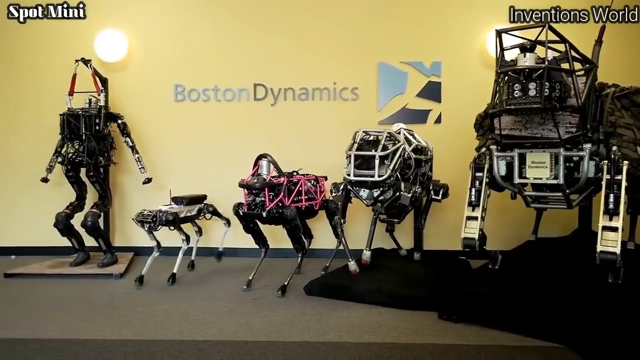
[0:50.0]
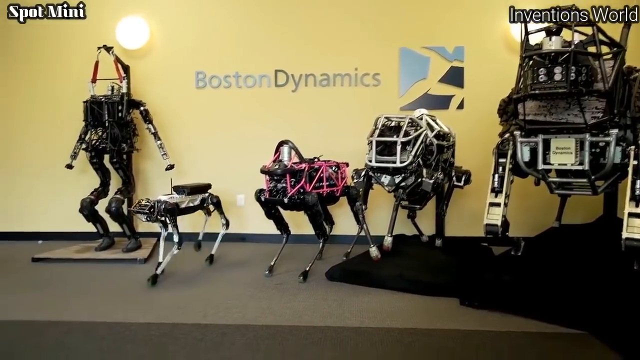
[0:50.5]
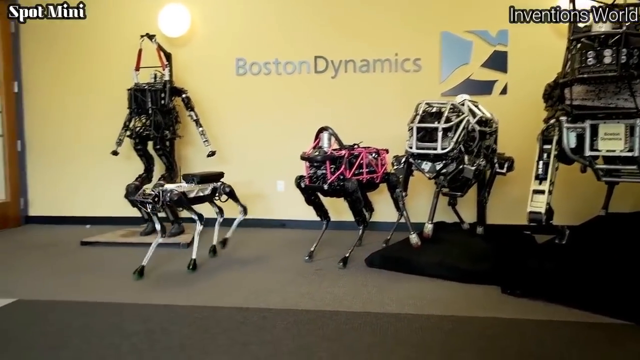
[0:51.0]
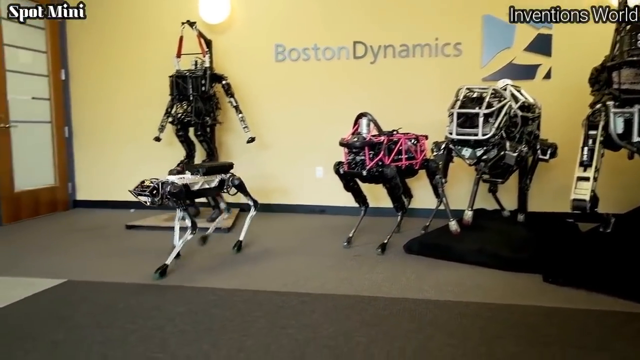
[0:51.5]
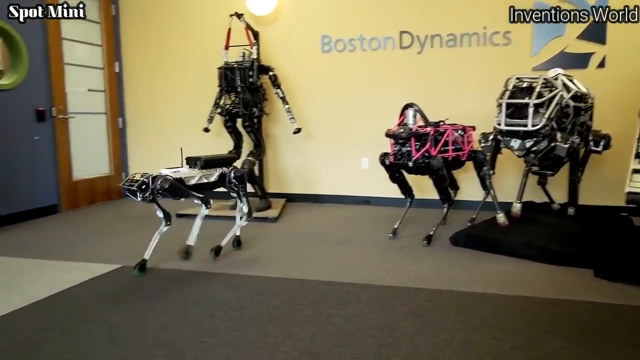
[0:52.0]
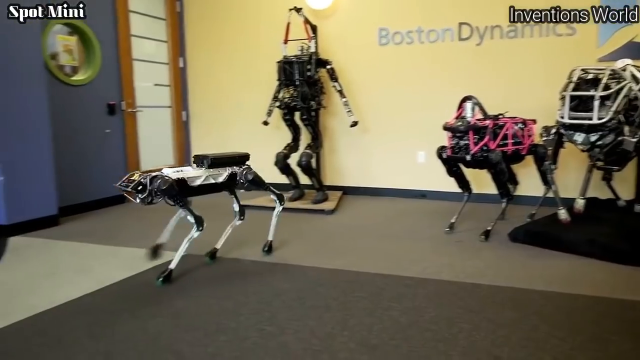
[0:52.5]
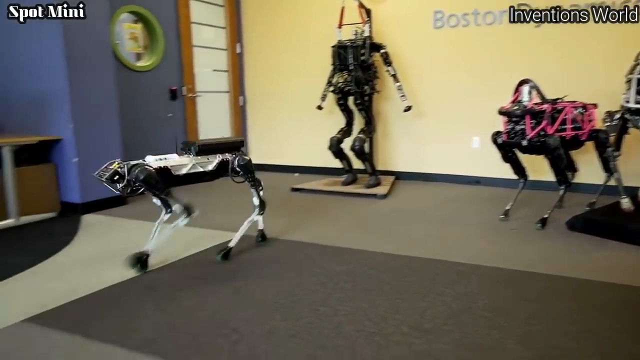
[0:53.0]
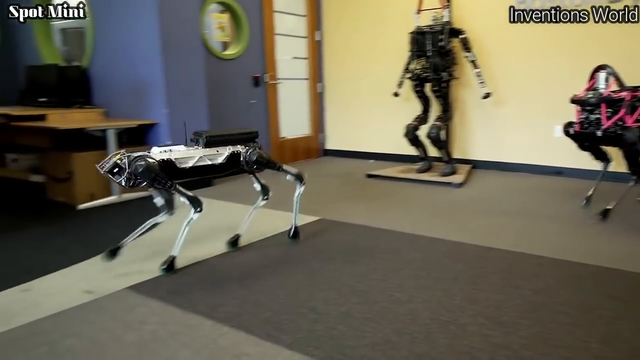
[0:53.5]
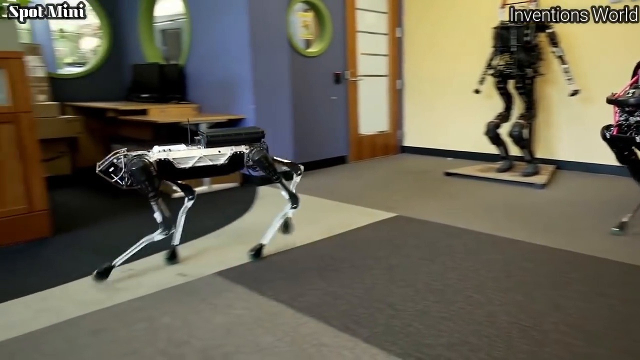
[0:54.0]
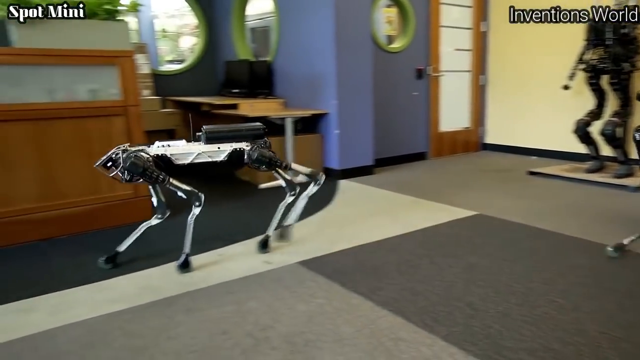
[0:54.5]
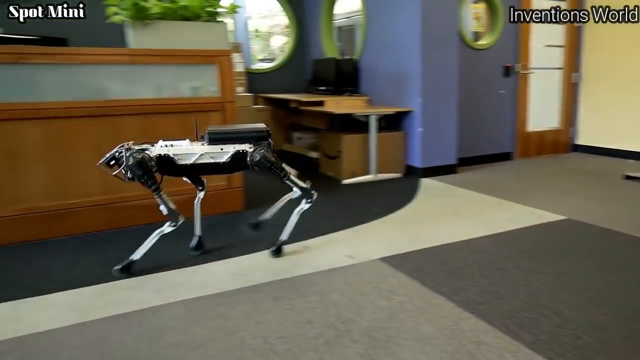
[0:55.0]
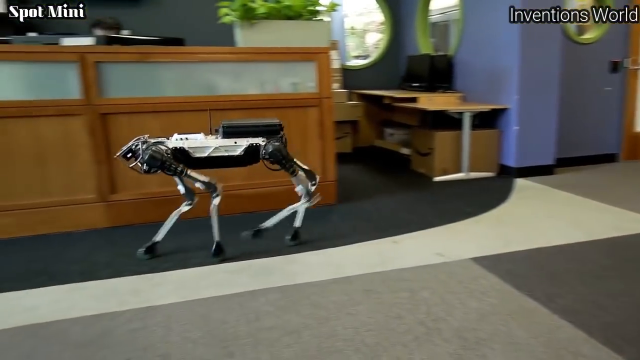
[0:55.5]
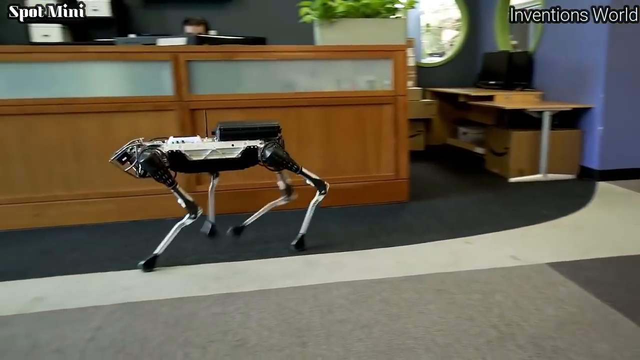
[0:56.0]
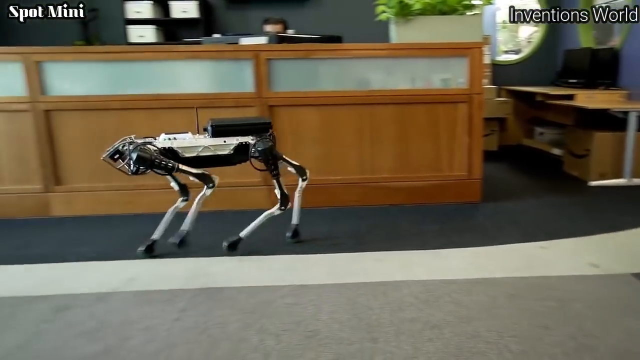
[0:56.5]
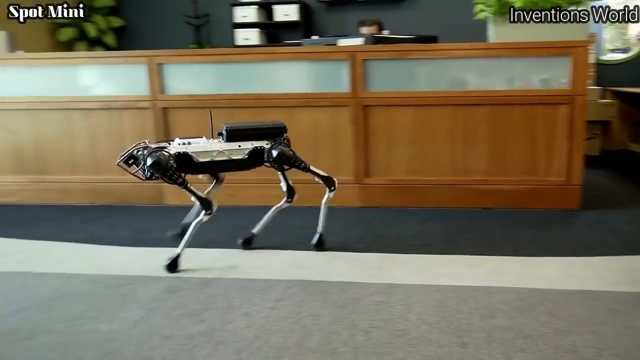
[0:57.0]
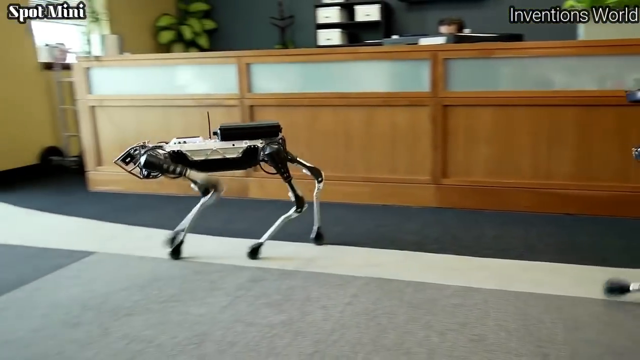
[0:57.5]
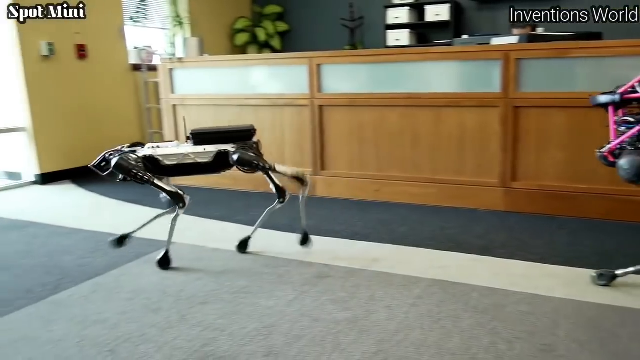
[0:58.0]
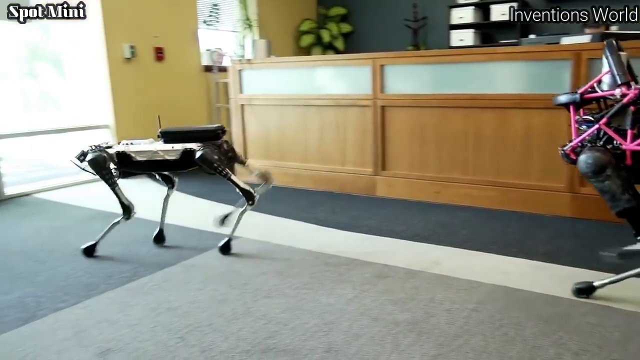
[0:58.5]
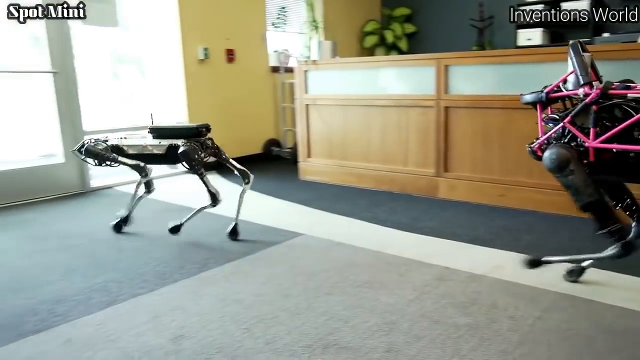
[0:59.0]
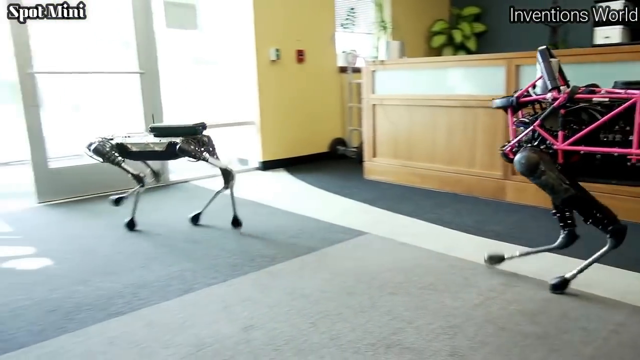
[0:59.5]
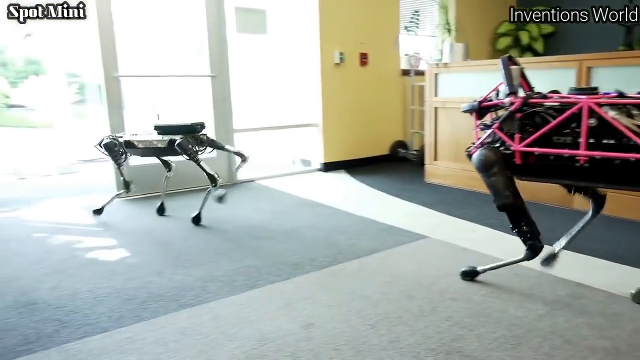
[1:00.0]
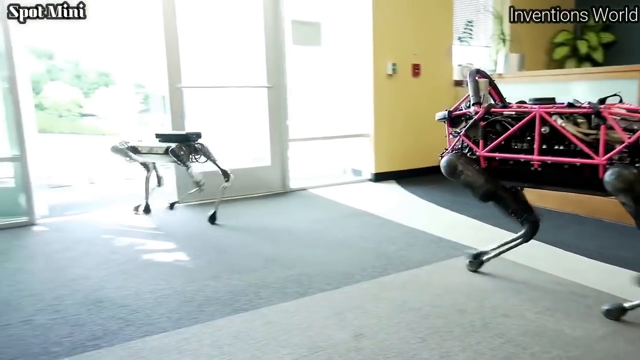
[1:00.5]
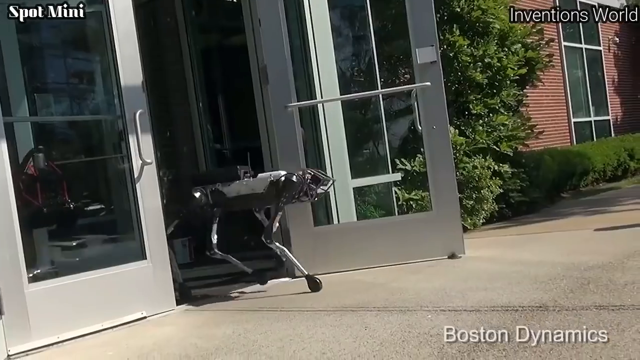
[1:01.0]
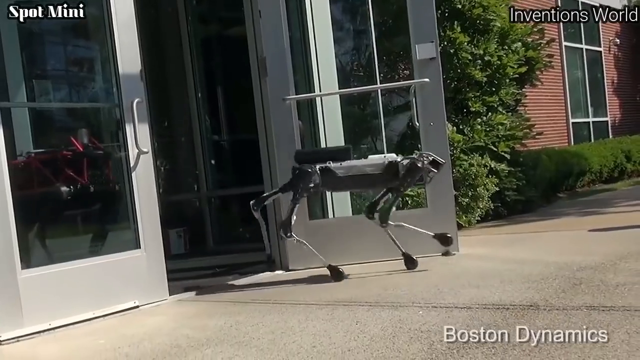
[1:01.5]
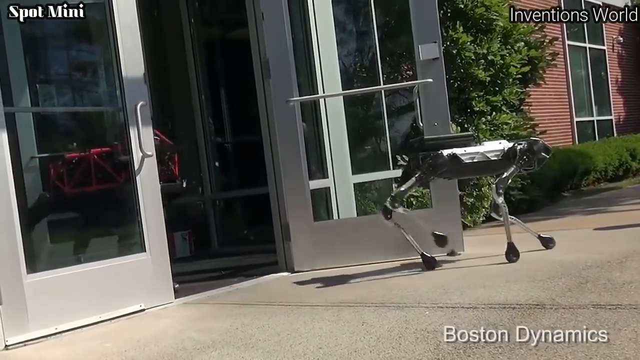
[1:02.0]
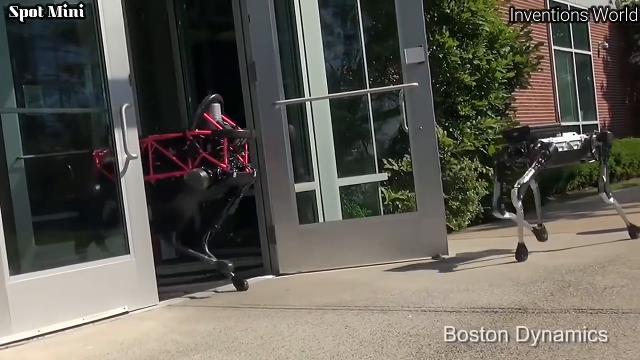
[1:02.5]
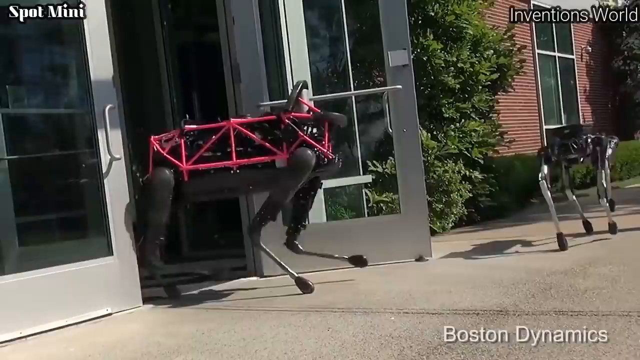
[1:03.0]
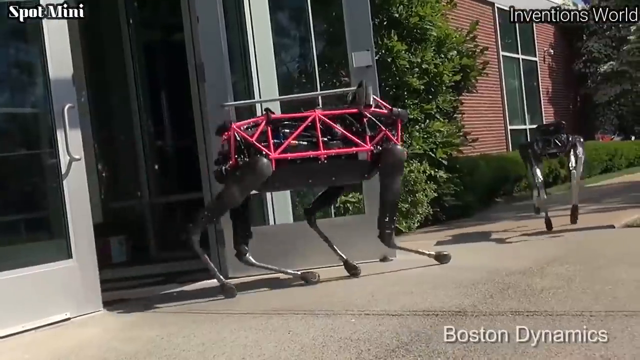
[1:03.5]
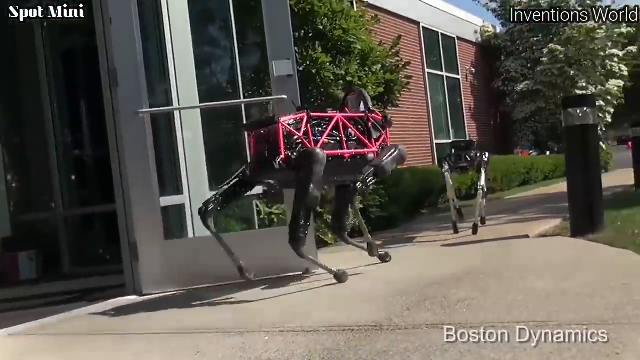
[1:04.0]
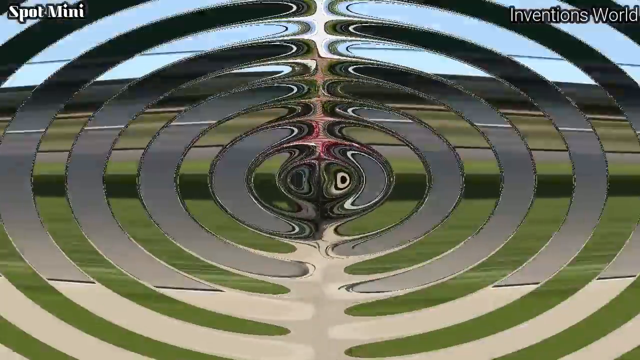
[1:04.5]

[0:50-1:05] In a new room, several different robots are displayed against a wall. One looks kind of humanoid but is larger, with cage-like chests. There are a couple more four-legged dog-looking ones, which have more cage rigging around them than the robots seen so far, and a very large one that is basically a much larger version of one of the caged dog robots. A little silver dog-looking robot is there, and a logo on the yellow wall in the back reads "Boston Dynamics". The silver dog robot walks forward and moves to the left, and the camera follows it. In the background, one of the caged robots with pink on it starts to follow it. The dog-looking robot walks in front of some brown furniture, and then the pink one moves in. Both start to walk outside through a couple of pairs of silver double doors before a graphic like a moving bubble starts and kind of distorts everything.